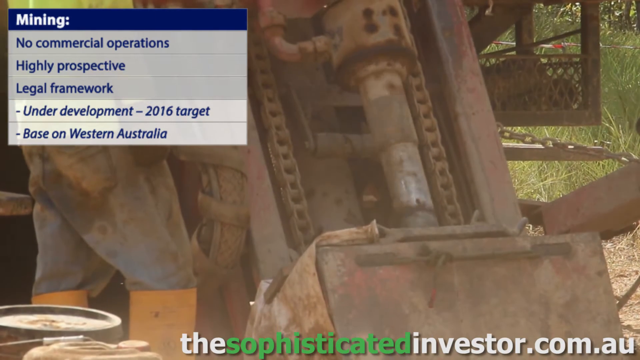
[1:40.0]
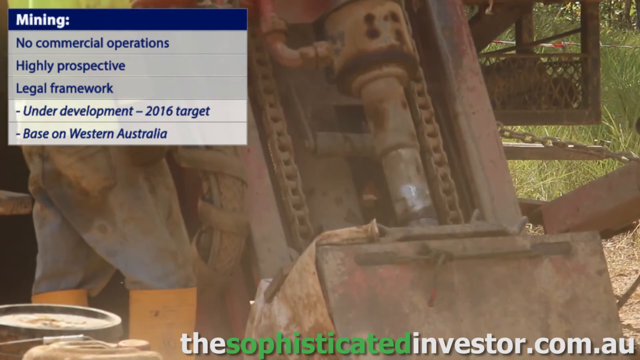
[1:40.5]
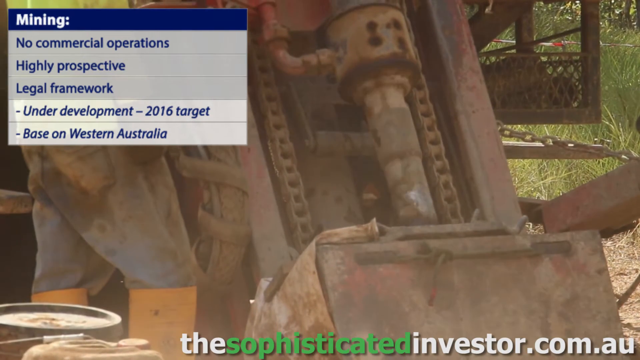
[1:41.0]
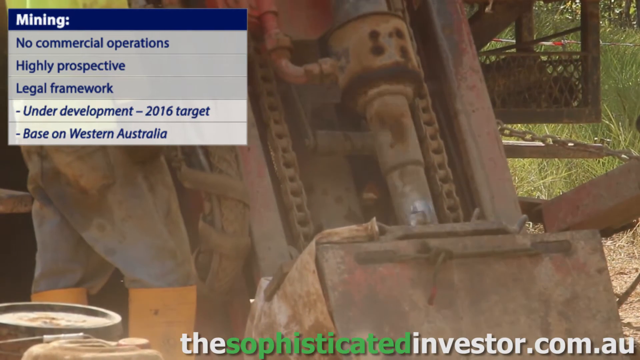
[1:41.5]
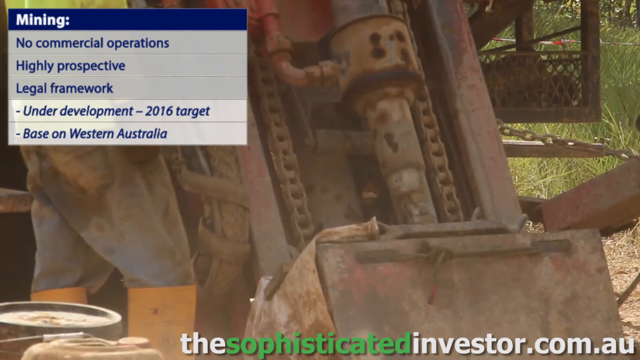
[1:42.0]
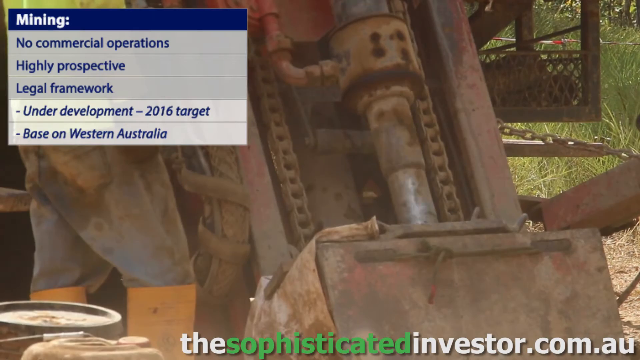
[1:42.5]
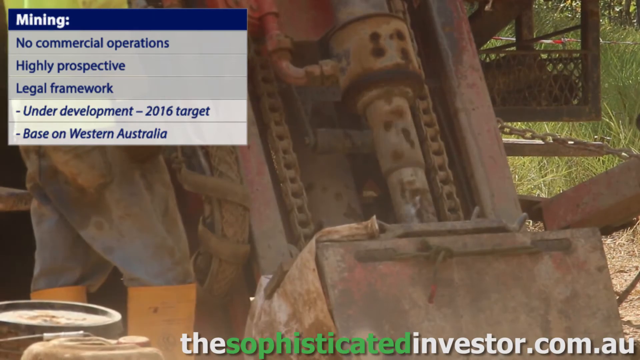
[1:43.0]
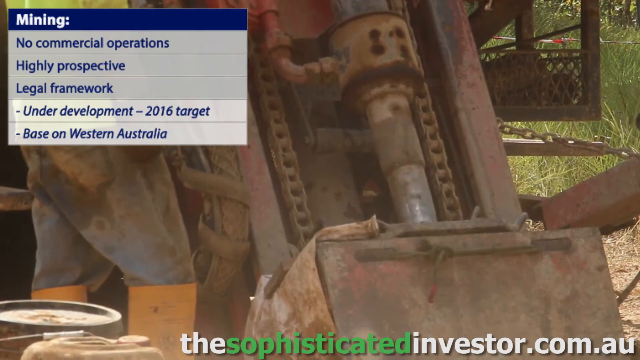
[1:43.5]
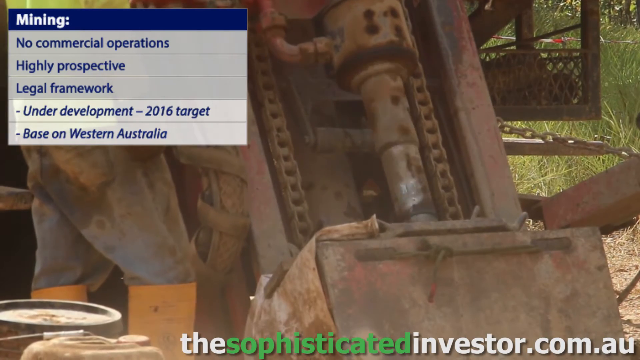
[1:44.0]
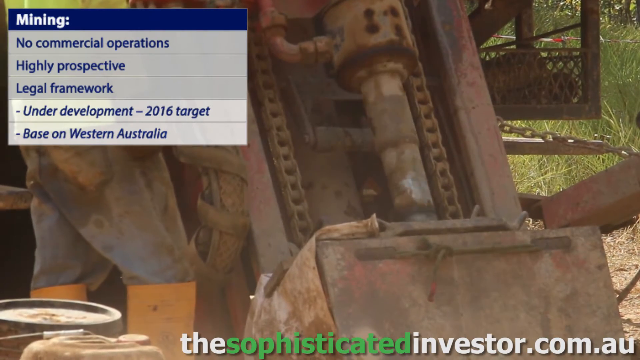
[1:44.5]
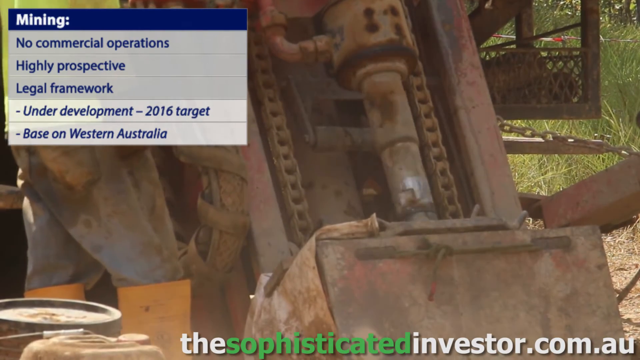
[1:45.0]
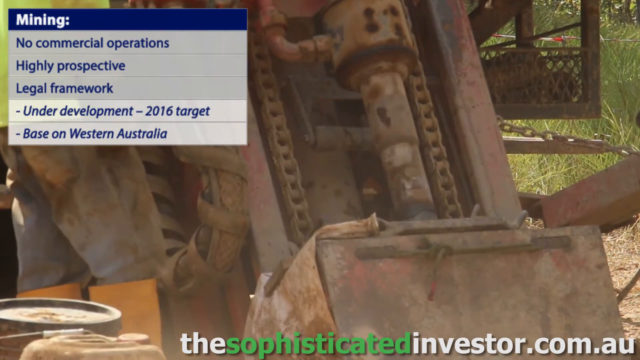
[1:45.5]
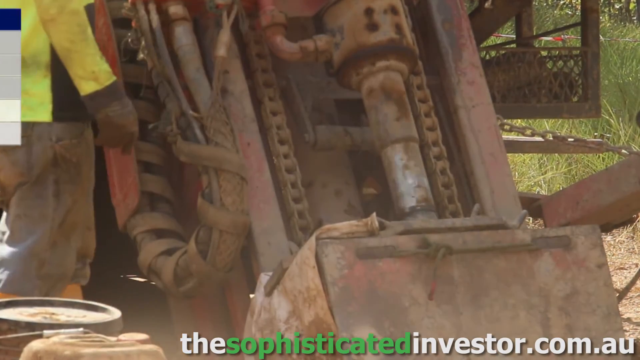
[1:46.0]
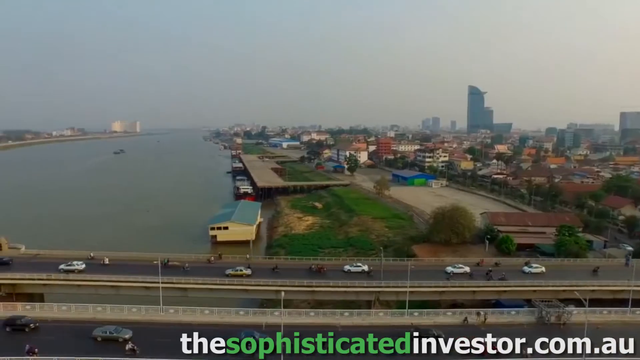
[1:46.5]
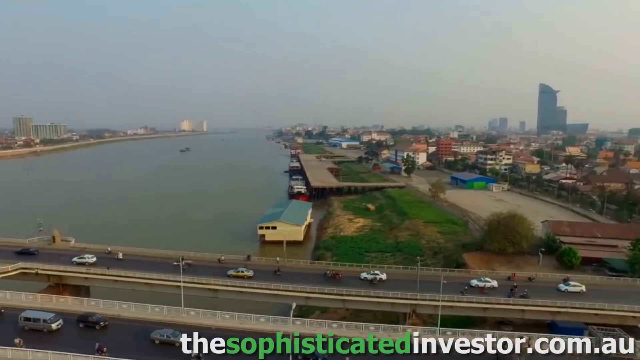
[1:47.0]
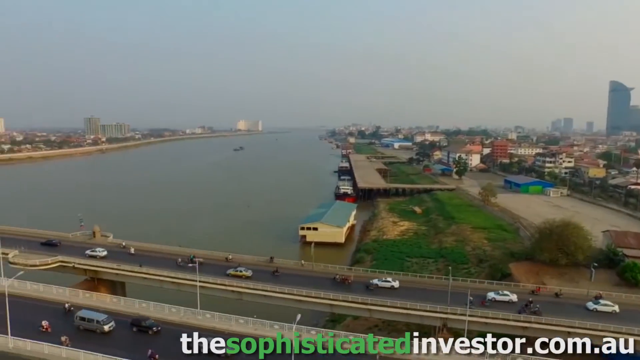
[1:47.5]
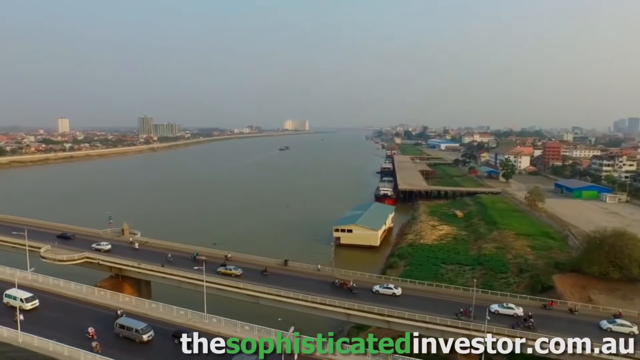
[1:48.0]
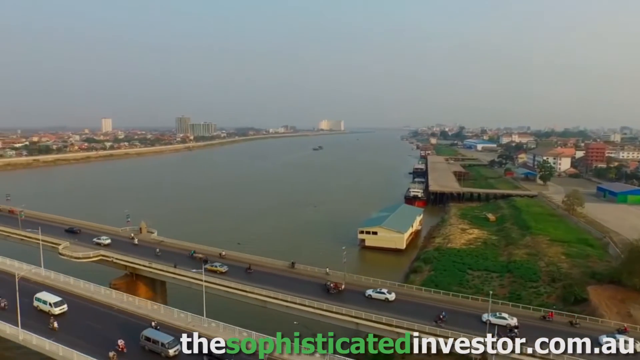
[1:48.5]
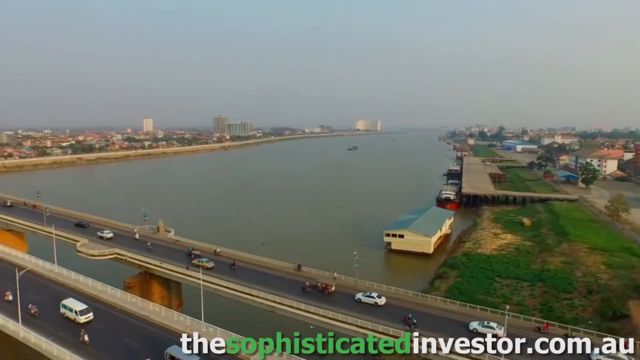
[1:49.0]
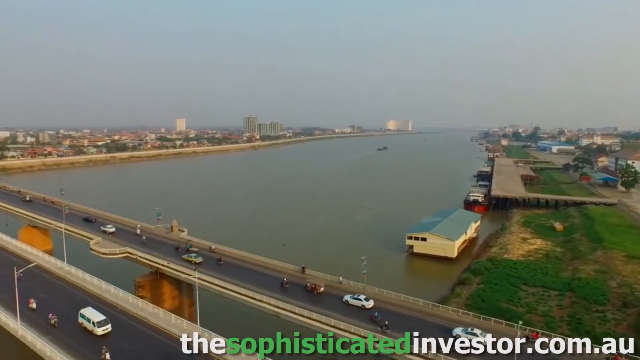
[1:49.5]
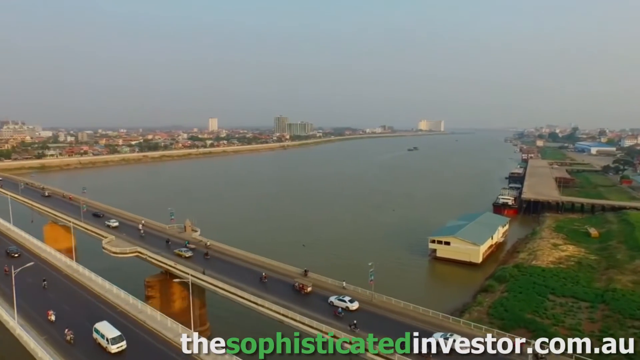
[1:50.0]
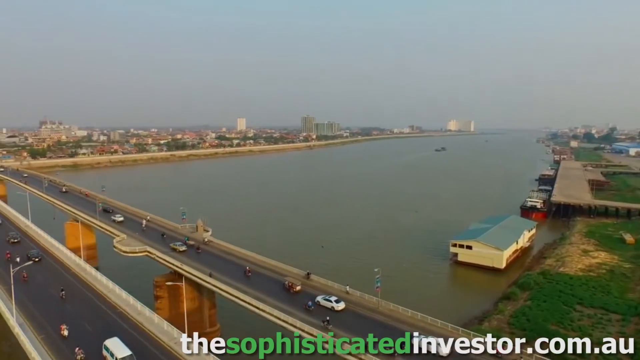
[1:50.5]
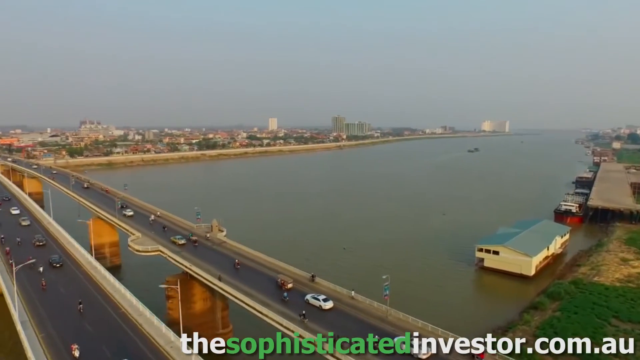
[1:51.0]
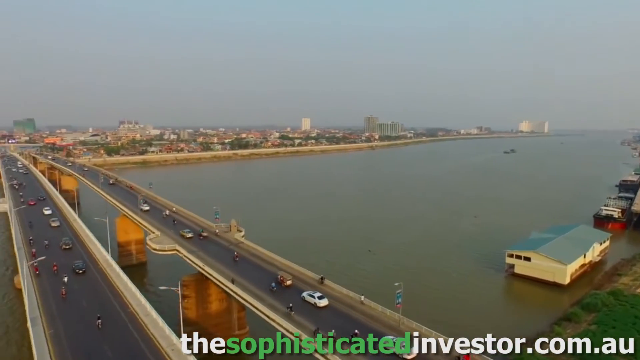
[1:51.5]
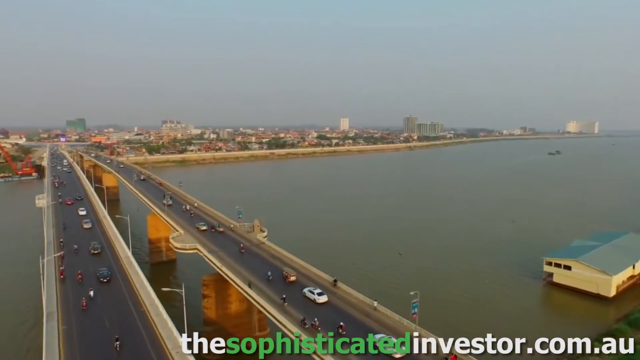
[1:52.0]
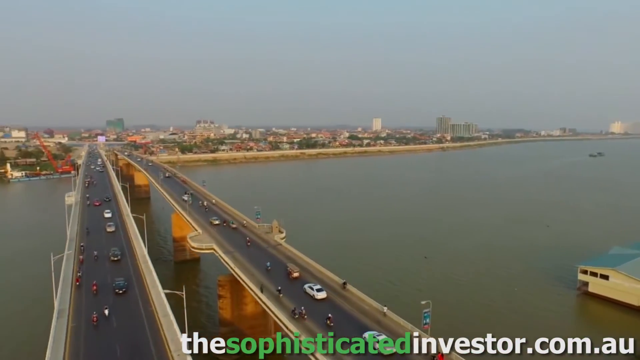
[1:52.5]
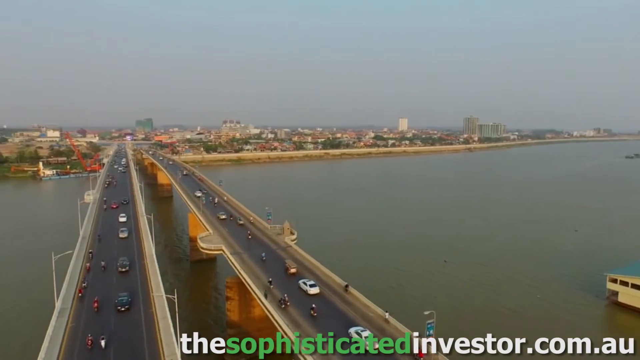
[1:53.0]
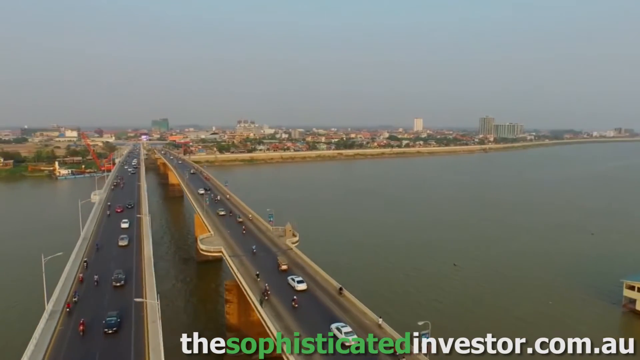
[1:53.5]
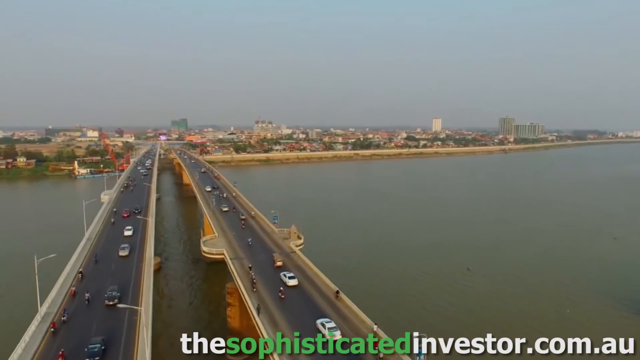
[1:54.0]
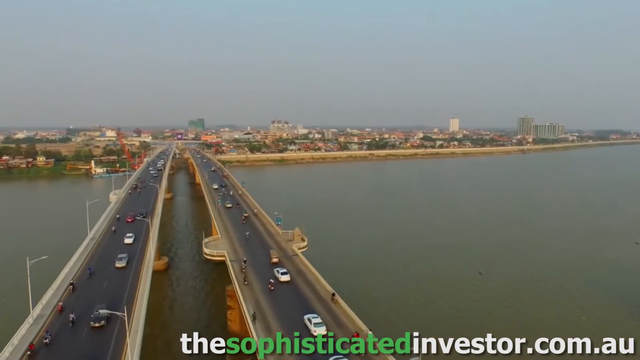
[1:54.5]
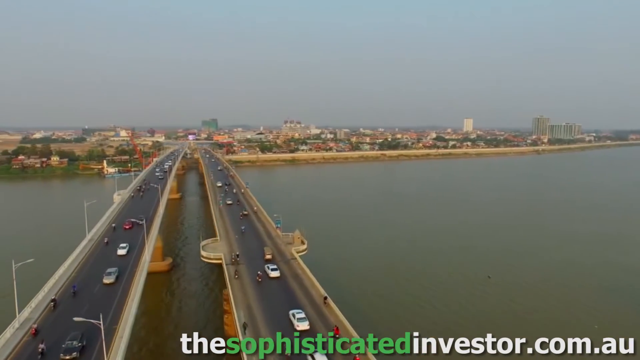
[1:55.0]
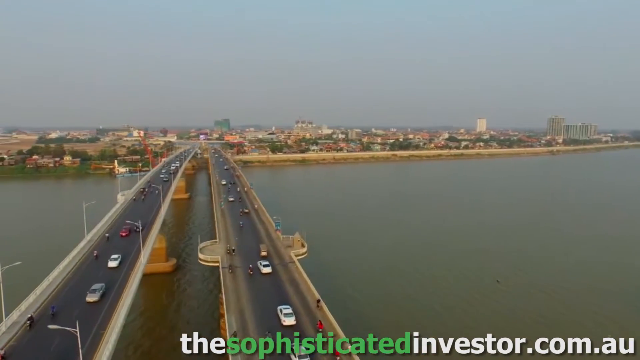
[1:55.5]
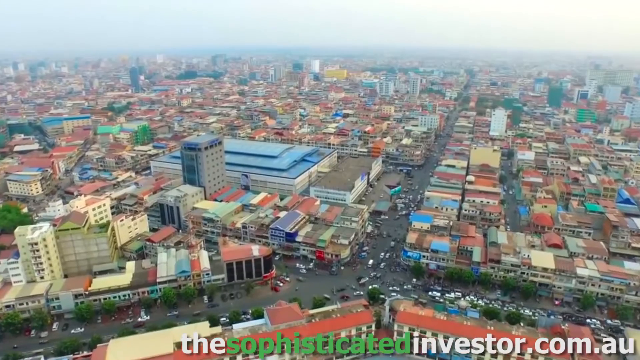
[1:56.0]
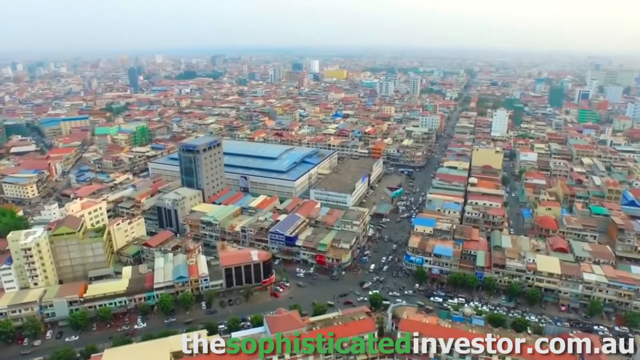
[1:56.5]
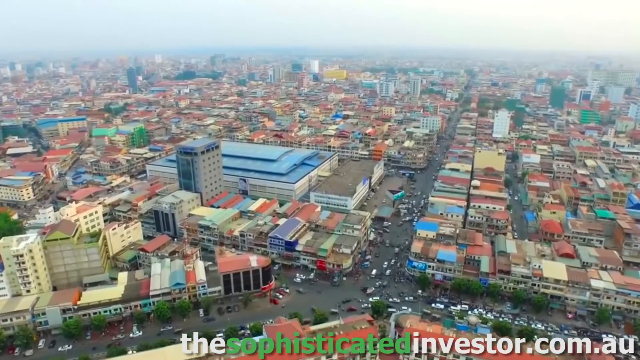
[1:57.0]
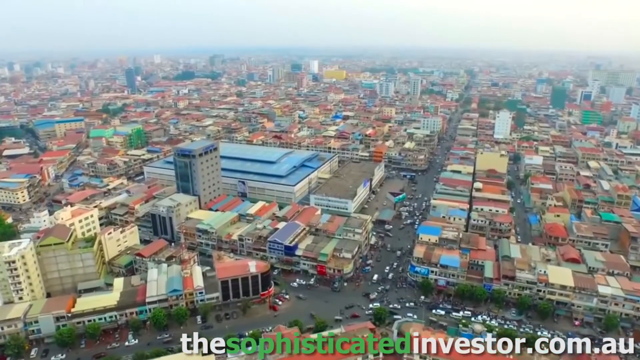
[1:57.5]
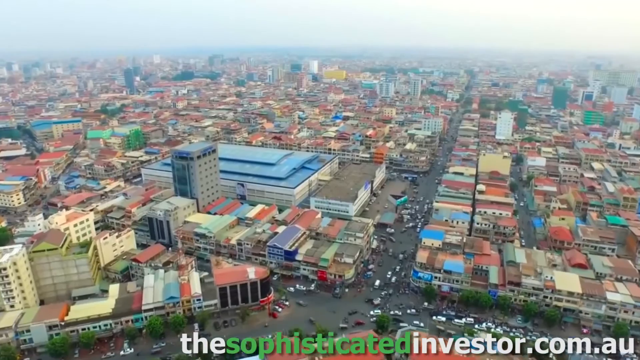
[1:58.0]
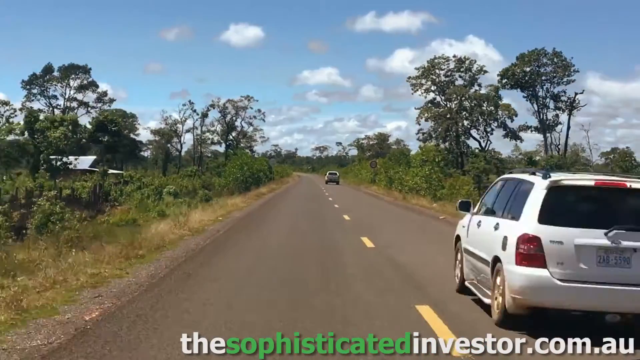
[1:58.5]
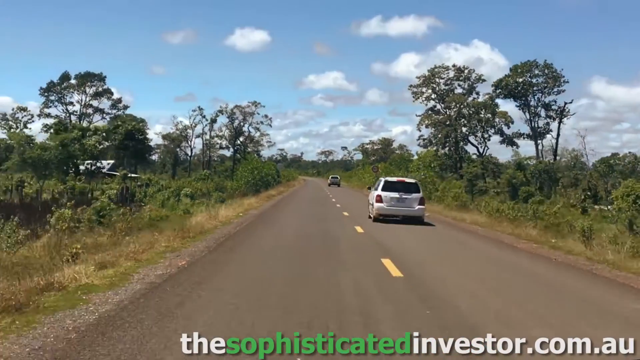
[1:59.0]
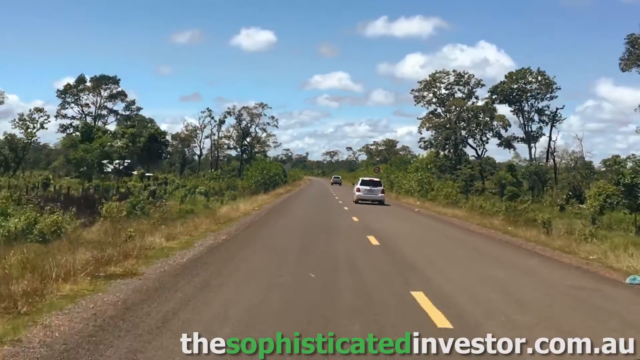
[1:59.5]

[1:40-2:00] A zoomed-in construction scene shows, on the left, the torso of a person in a yellow vest, and to its right some sort of rotating cylinder, very dark brown in general, that looks like possibly a drill they are working with. The video cuts abruptly to a bridge running roughly from the right side to the left side along the very bottom of the frame, with cars going in both directions. The view is from about the height of a drone flying overhead, a little lower than an airplane or helicopter. In the background a river runs from the lower left to about the center top of the frame, ending about two-thirds of the way up where it transitions into sky. There is land on the left and right of it, appearing to hold small cities or towns on either side. The camera pans to the right. The video then goes to an overhead view from about helicopter height looking down on a city with a lot of pastel-colored buildings. It then transitions to a scene filmed from the left-hand lane of a road while moving backwards, with a couple of cars in the right-hand lane driving away.